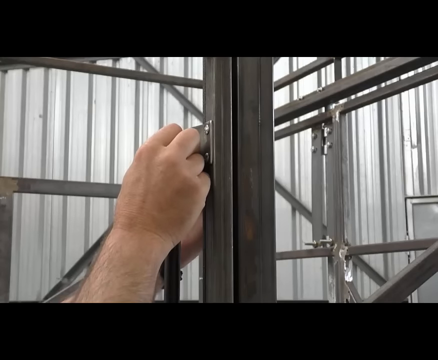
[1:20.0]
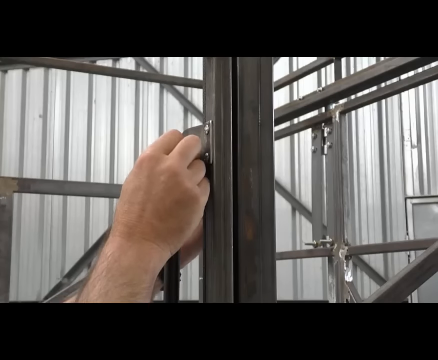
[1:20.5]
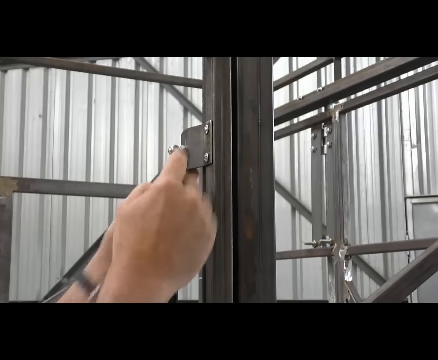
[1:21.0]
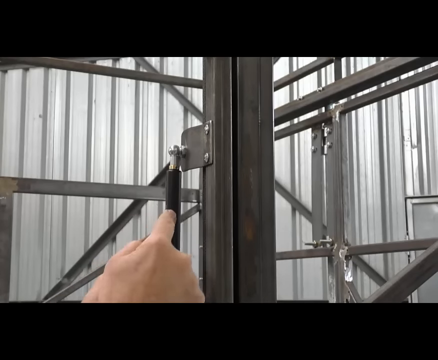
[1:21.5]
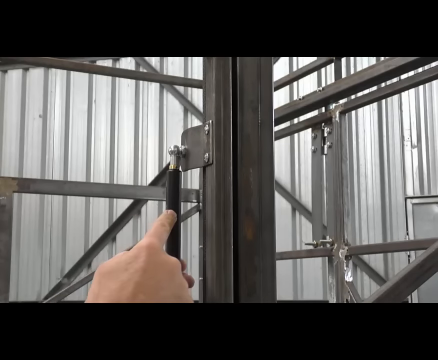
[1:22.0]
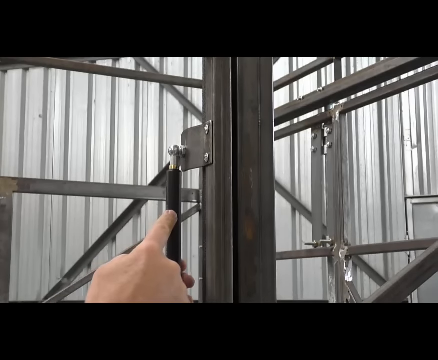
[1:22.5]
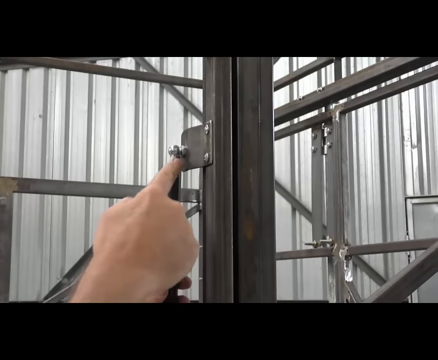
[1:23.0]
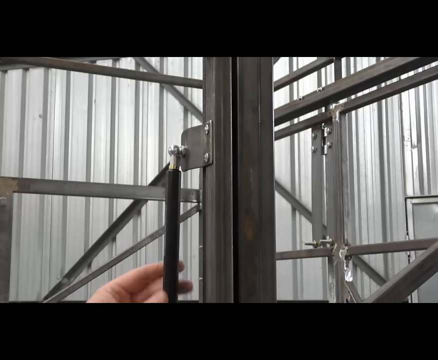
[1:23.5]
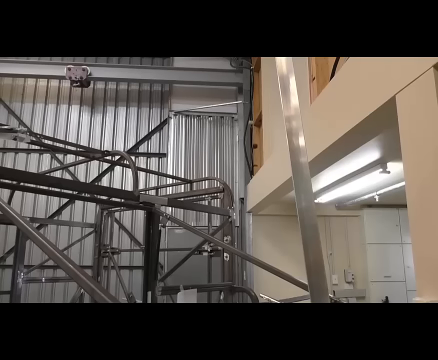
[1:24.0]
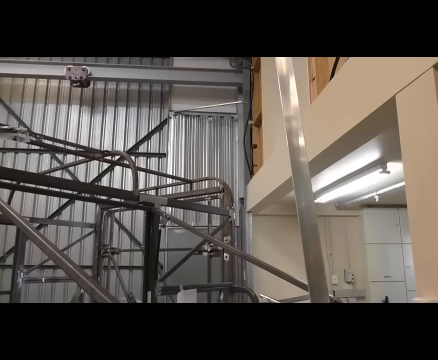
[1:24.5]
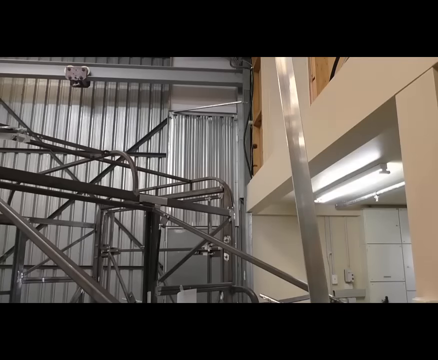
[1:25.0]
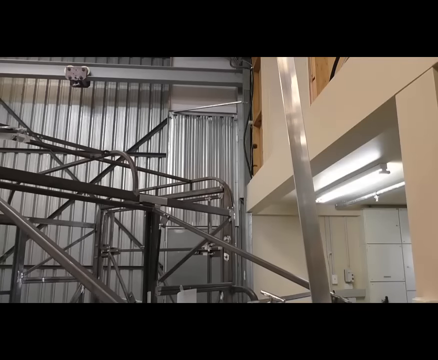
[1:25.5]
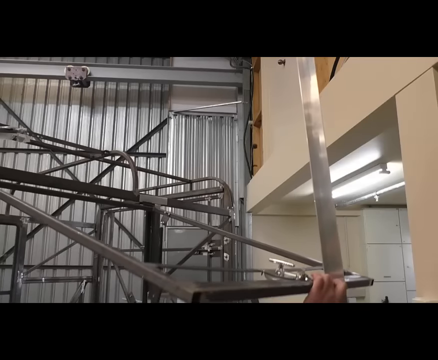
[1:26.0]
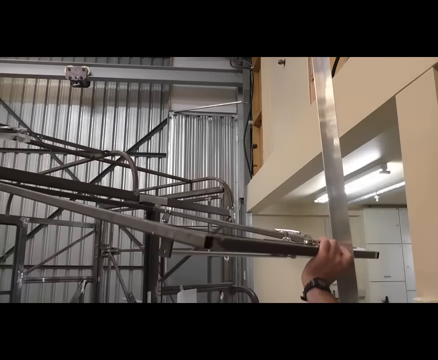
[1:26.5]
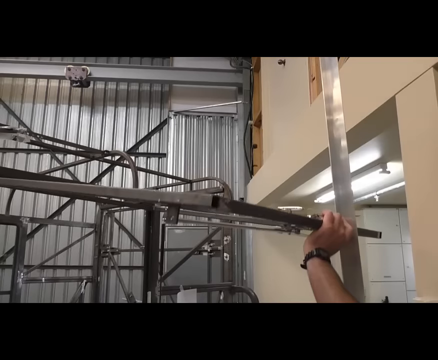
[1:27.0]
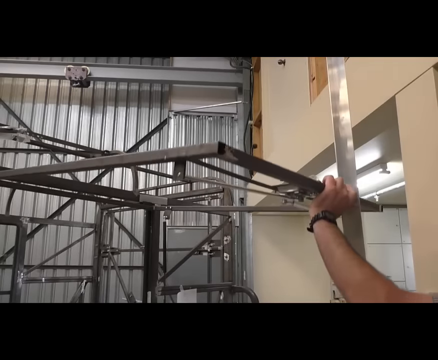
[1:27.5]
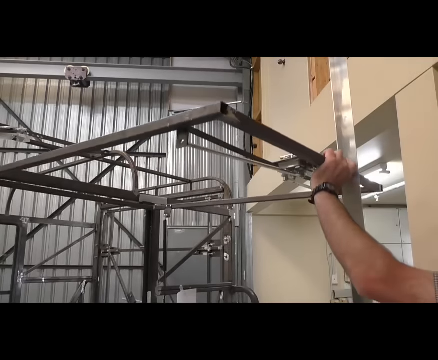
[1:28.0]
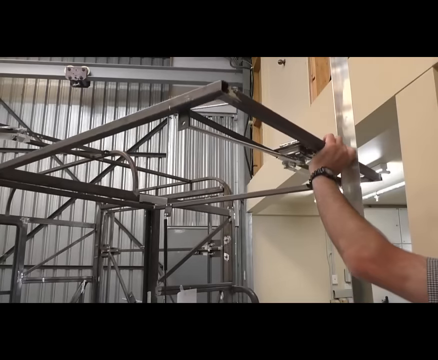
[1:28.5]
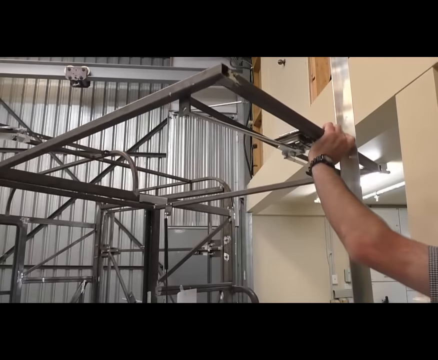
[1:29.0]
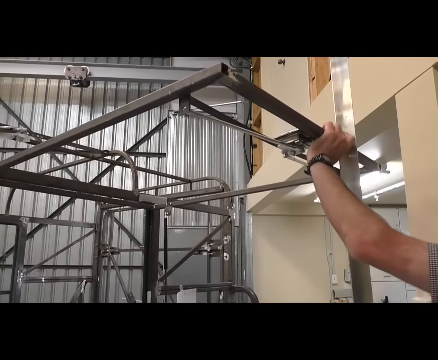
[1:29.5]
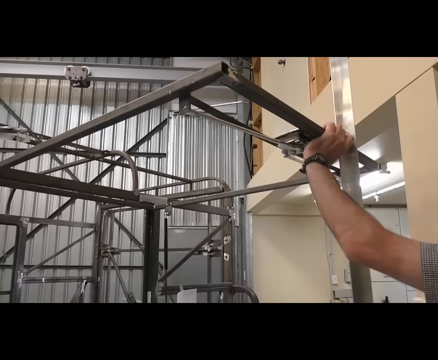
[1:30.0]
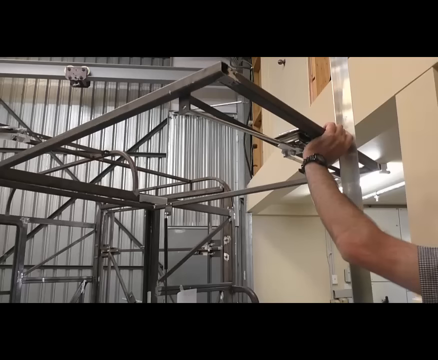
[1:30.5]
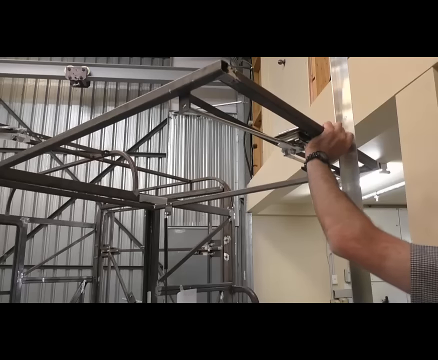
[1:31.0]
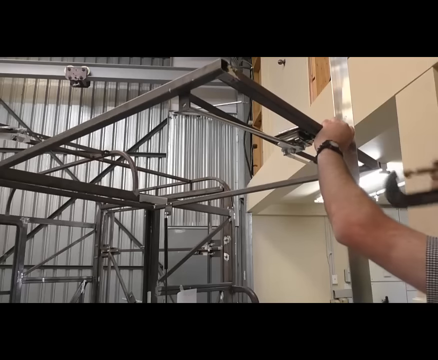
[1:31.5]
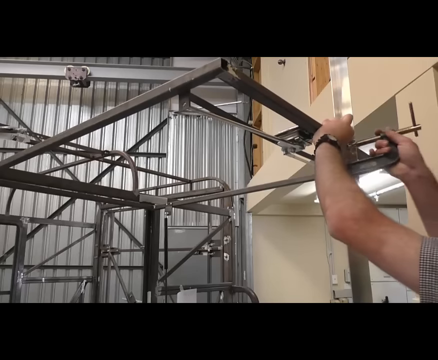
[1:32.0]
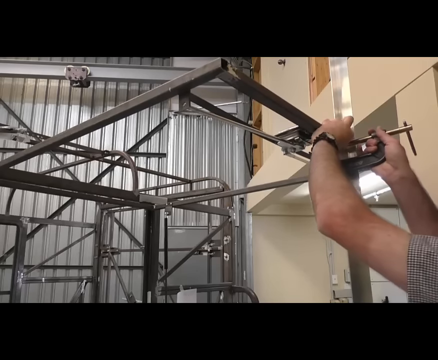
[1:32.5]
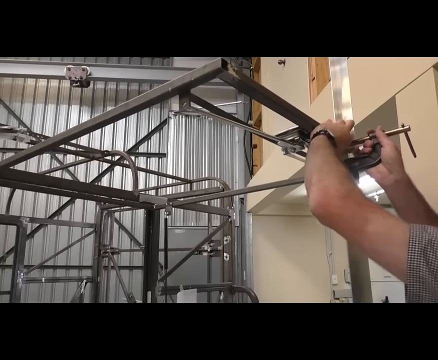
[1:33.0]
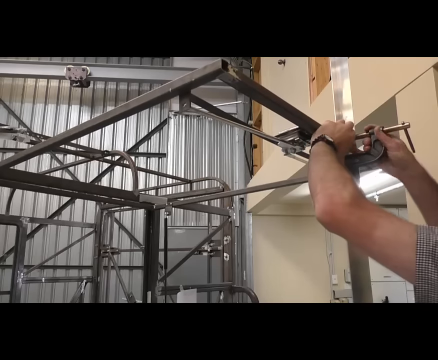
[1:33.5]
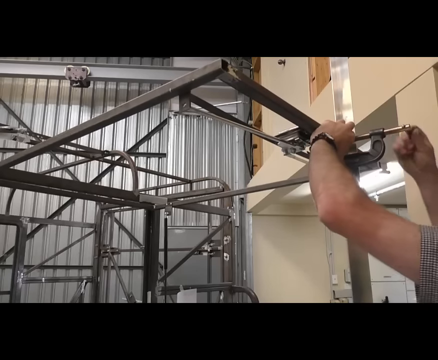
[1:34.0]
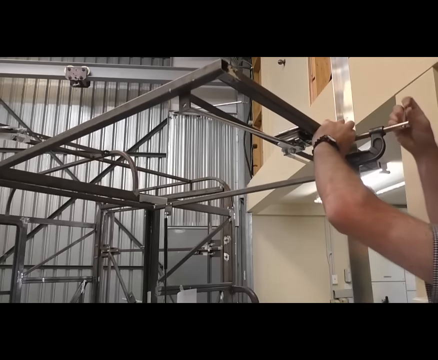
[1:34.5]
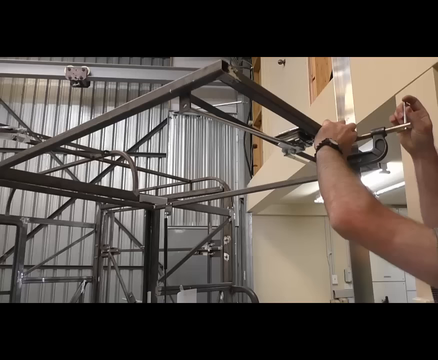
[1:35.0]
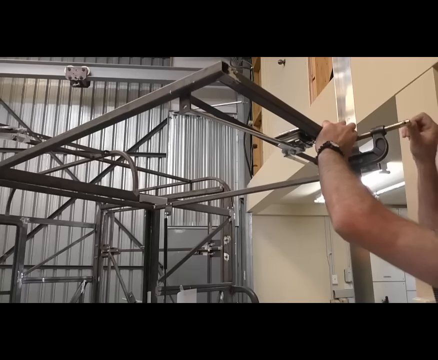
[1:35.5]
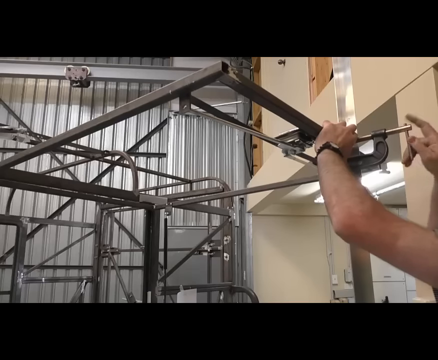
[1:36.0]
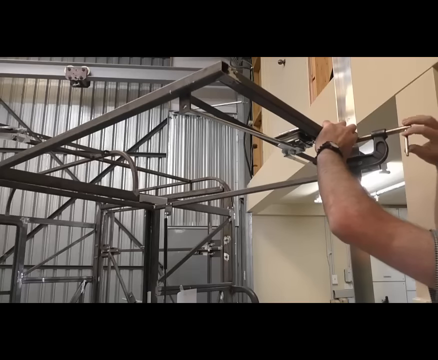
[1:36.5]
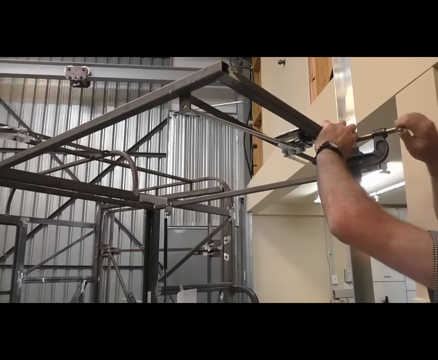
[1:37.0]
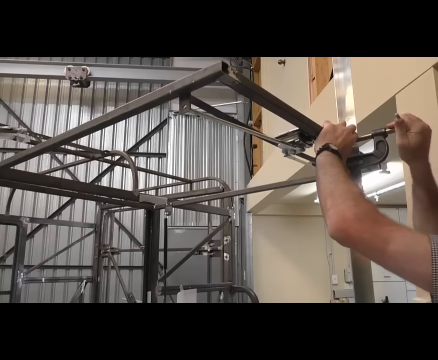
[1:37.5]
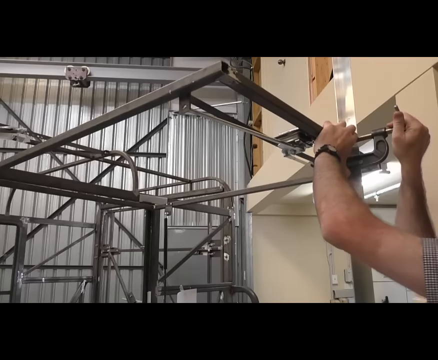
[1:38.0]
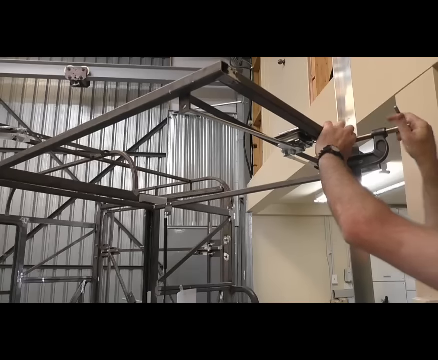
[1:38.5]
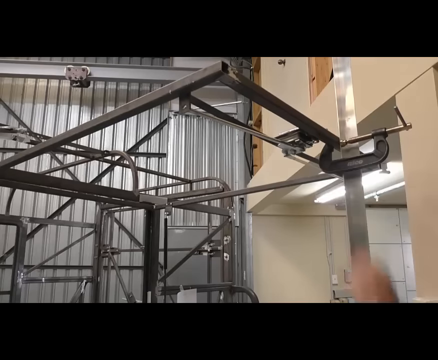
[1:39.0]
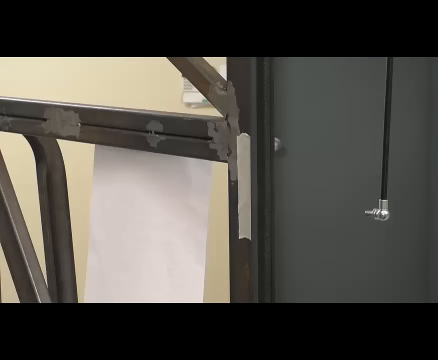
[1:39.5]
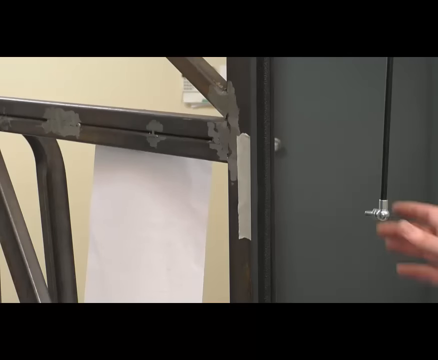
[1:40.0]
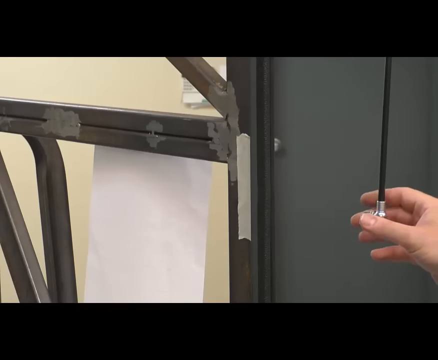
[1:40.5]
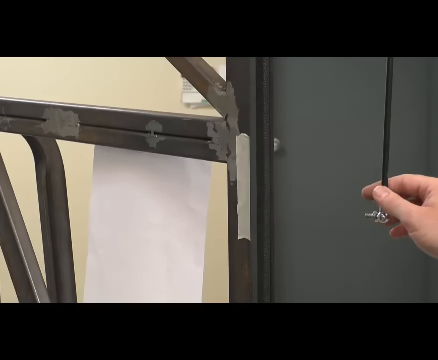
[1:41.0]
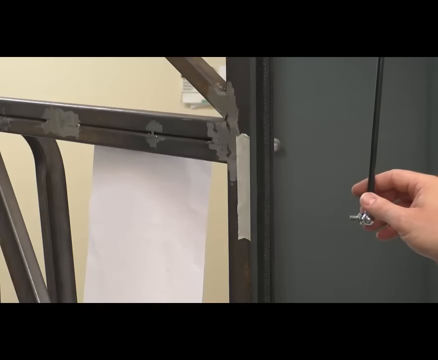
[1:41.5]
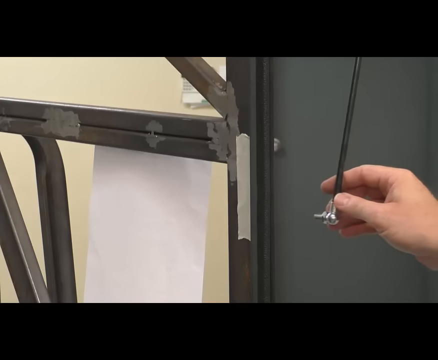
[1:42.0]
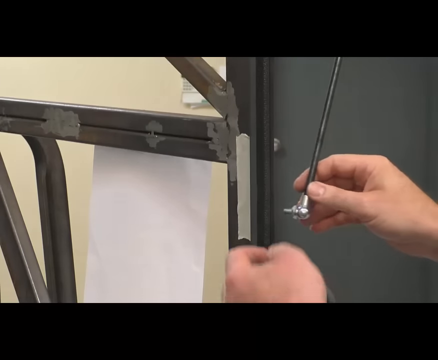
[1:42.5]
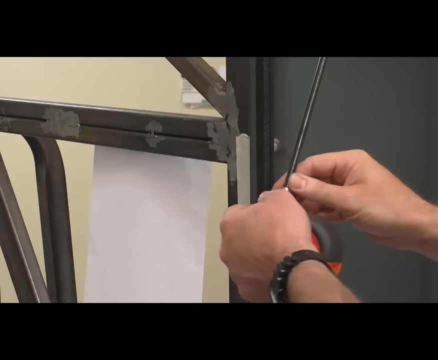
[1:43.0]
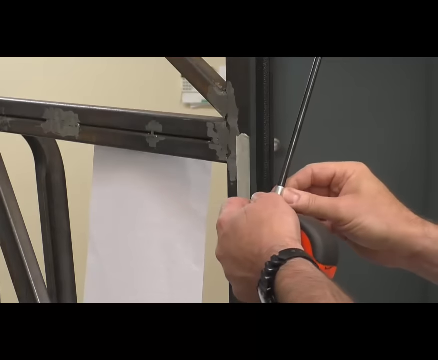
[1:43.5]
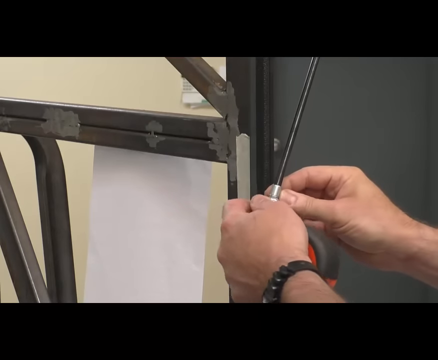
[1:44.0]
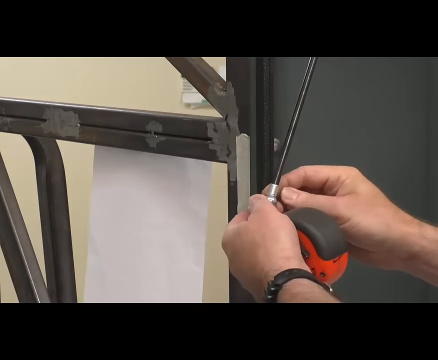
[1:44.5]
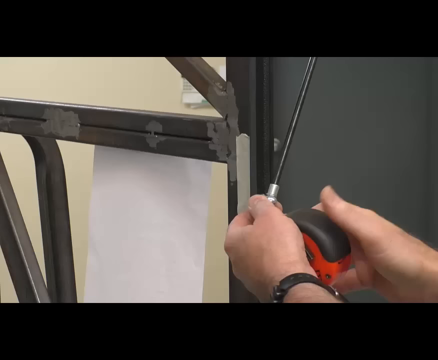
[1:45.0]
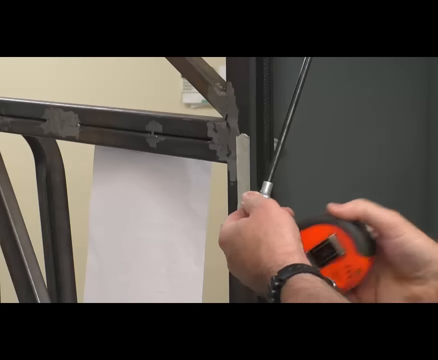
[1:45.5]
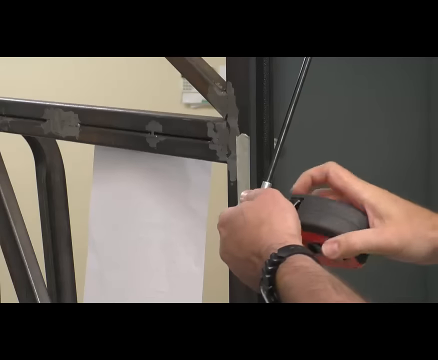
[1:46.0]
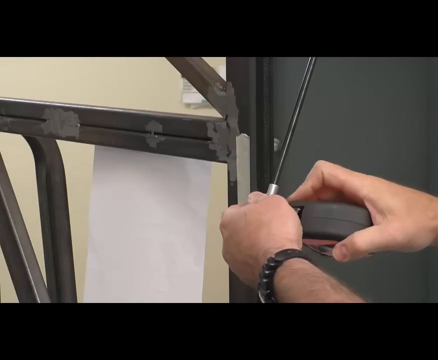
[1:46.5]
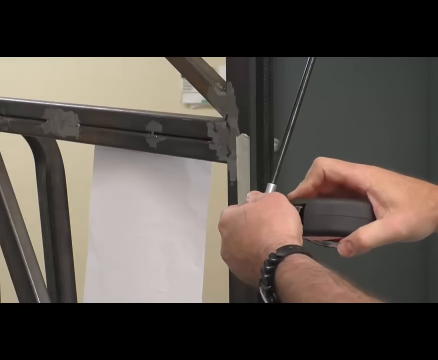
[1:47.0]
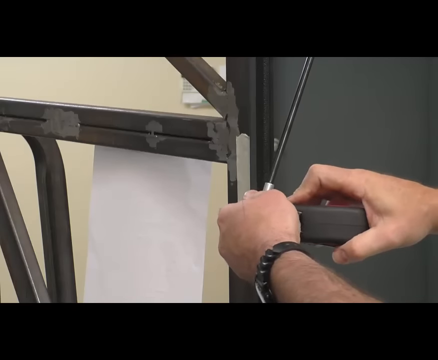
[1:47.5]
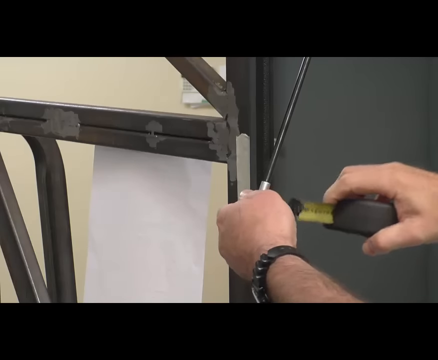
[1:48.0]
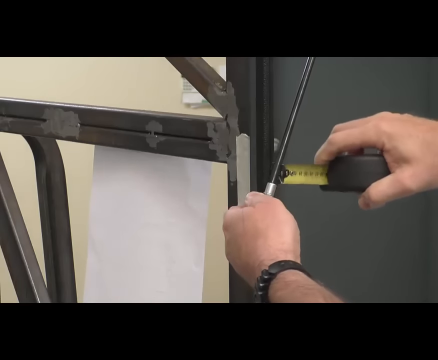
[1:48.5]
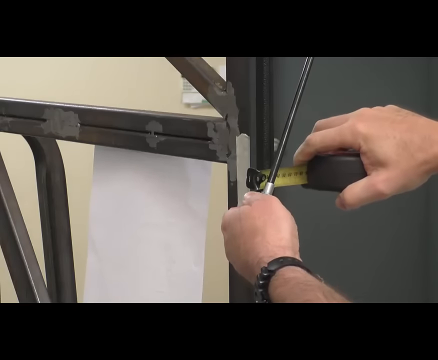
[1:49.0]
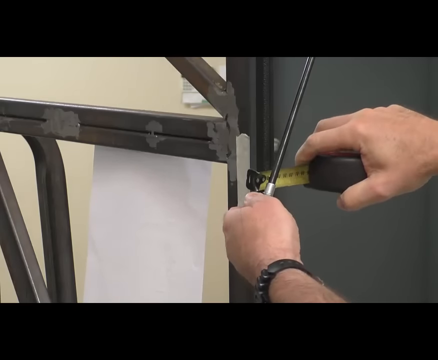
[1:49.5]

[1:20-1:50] The metal frame, a gasket and the man's hands are shown, followed by a wider view as he lifts the side of the metal frame and uses a clamp to clamp something onto it. He keeps measuring, carefully and precisely. More of the warehouse is visible: a corrugated silver wall just to the right of the middle of the frame, and to the left and right a fluorescent light and tan-colored walls. Holding the measuring tape, he measures between two metal pieces that fit against each other. The metal cage is on some type of thing with wheels.